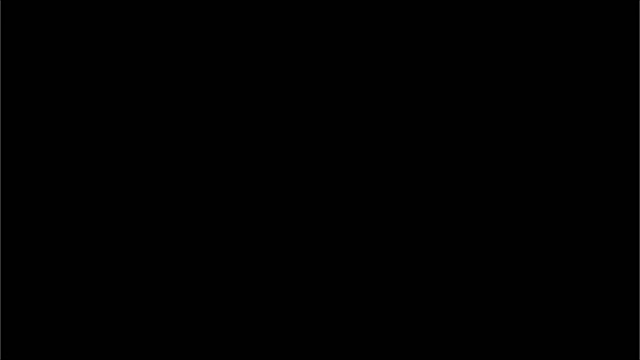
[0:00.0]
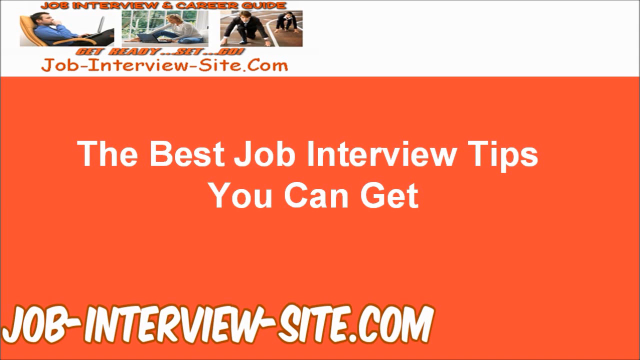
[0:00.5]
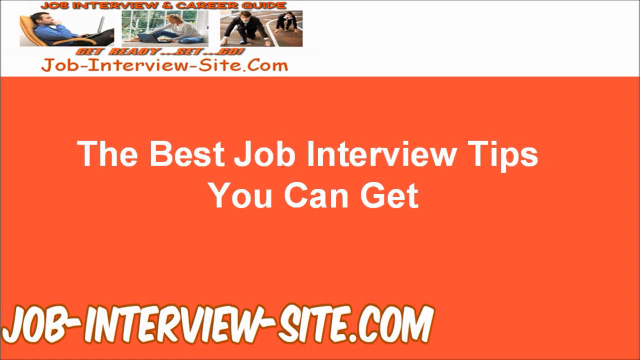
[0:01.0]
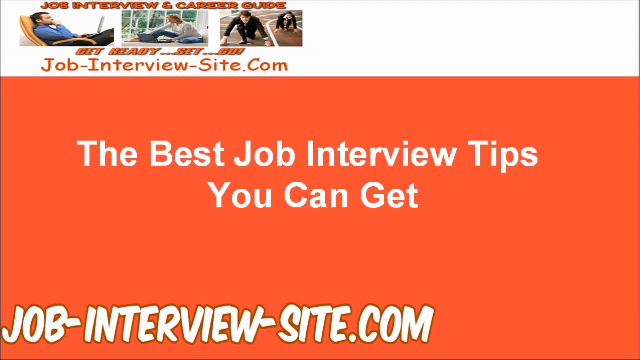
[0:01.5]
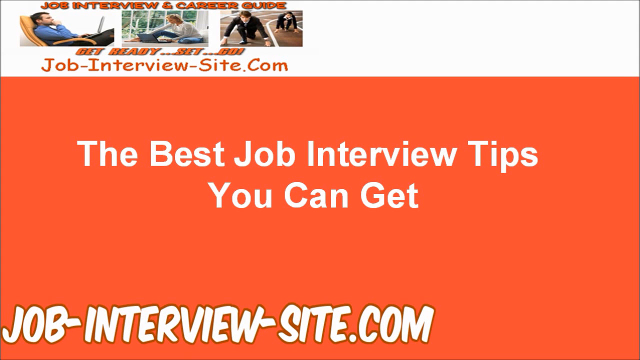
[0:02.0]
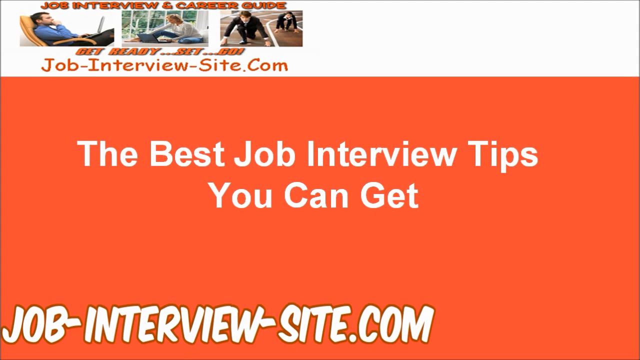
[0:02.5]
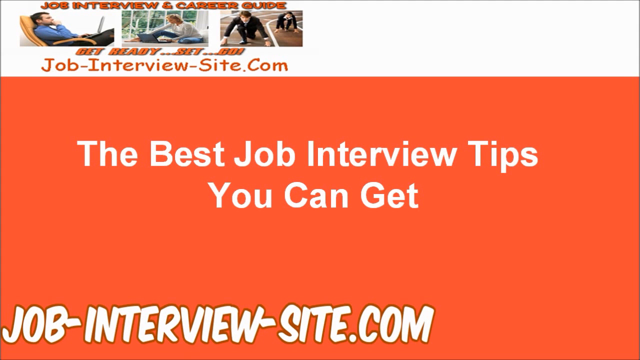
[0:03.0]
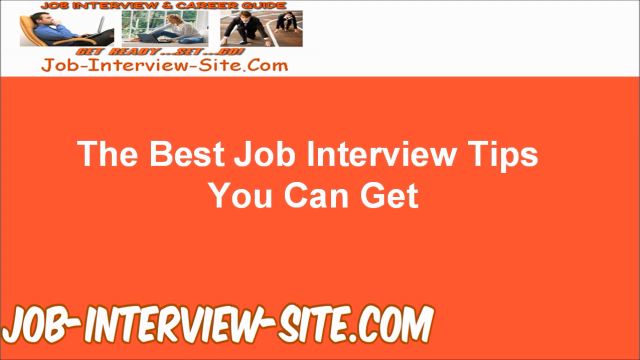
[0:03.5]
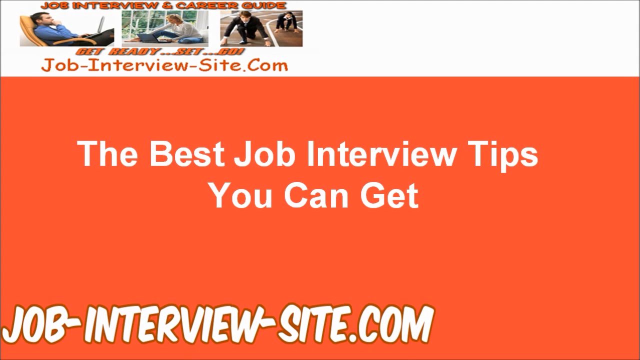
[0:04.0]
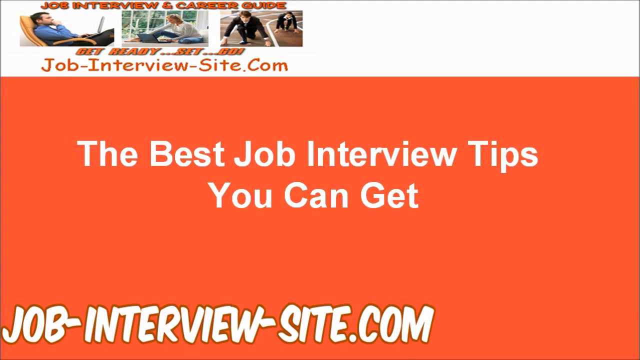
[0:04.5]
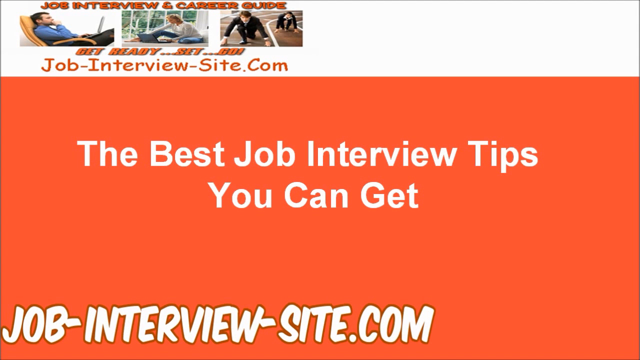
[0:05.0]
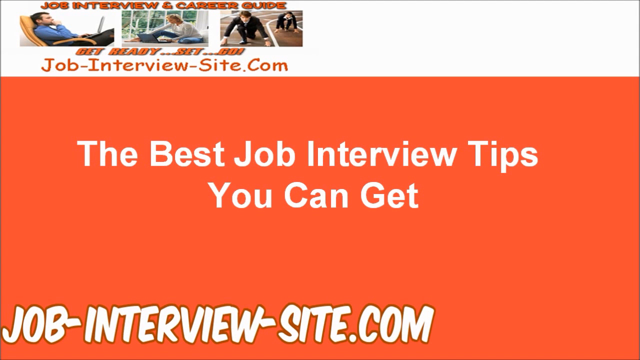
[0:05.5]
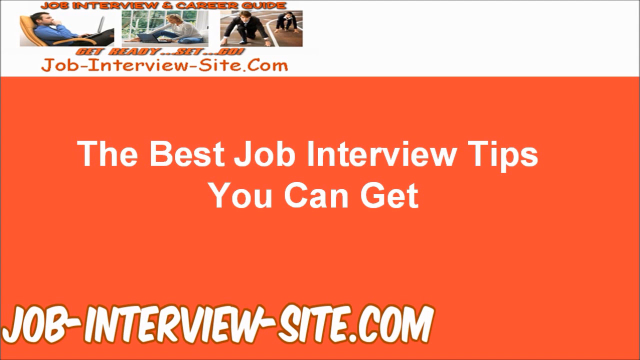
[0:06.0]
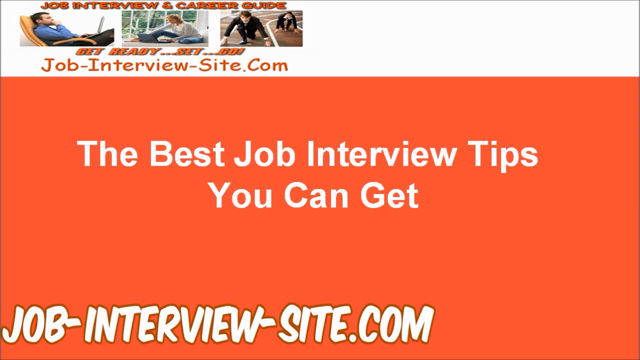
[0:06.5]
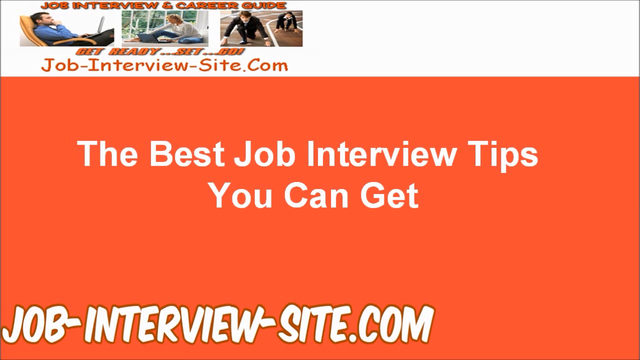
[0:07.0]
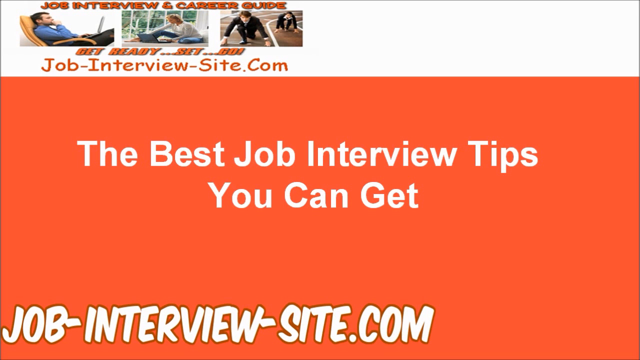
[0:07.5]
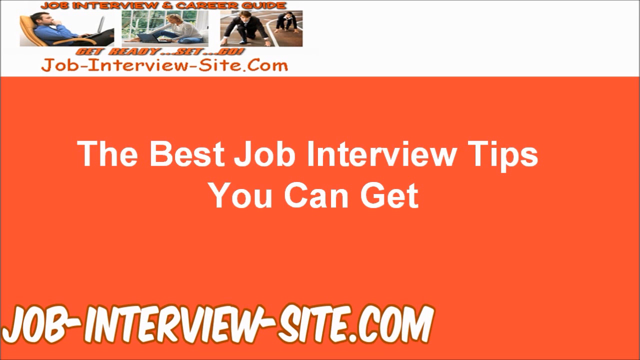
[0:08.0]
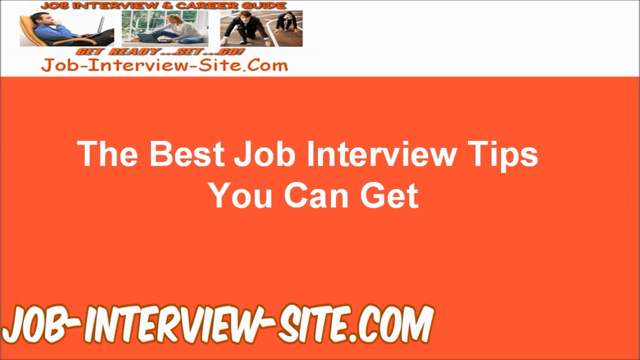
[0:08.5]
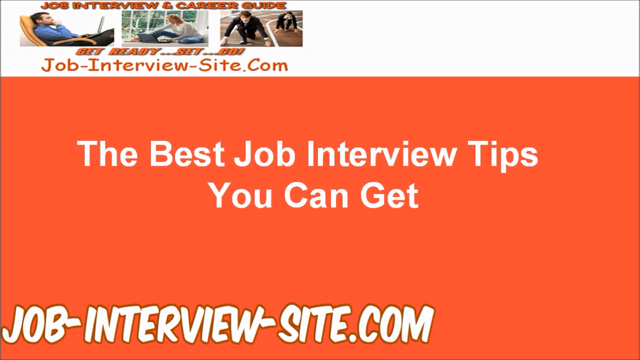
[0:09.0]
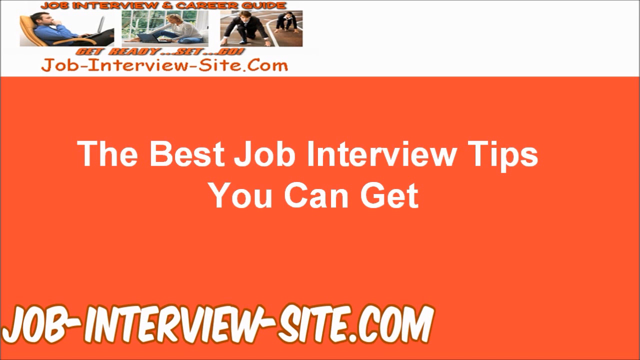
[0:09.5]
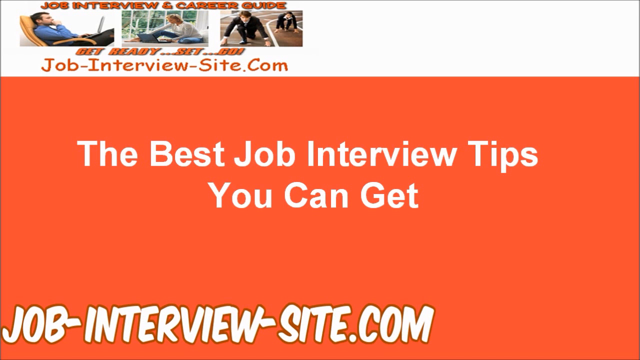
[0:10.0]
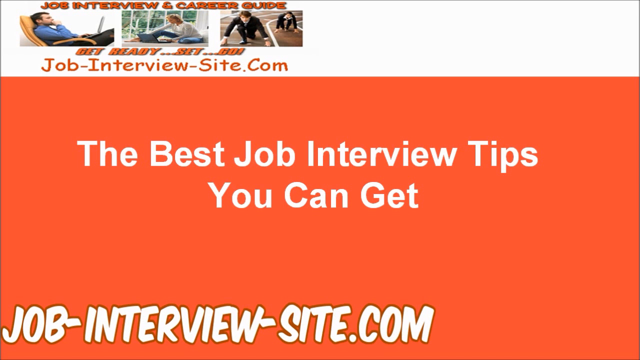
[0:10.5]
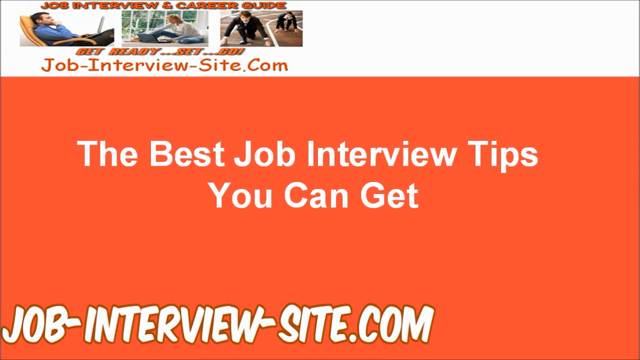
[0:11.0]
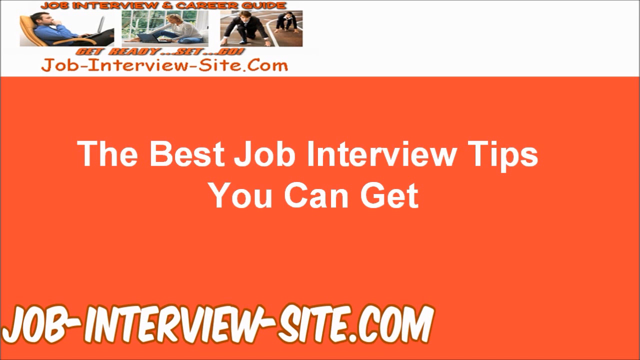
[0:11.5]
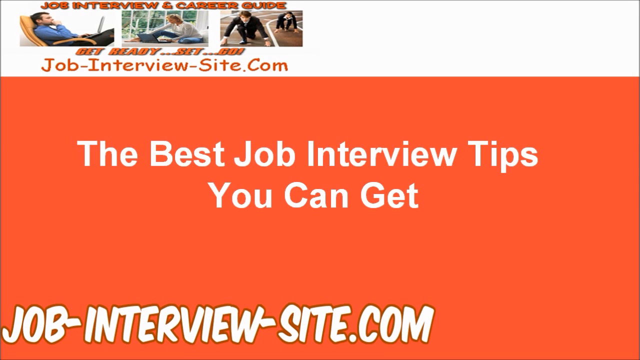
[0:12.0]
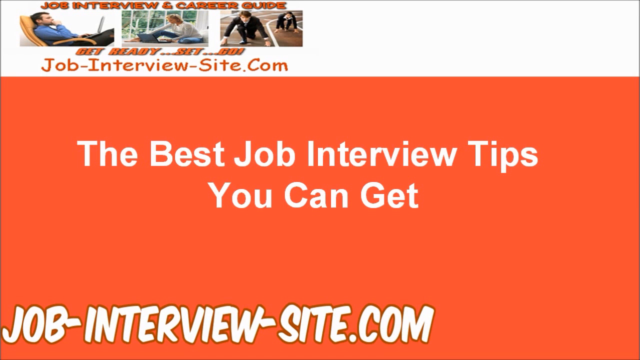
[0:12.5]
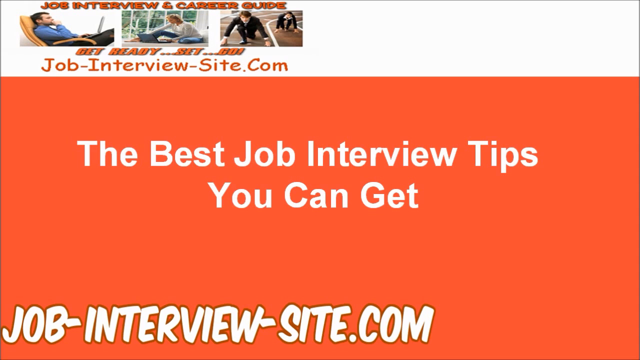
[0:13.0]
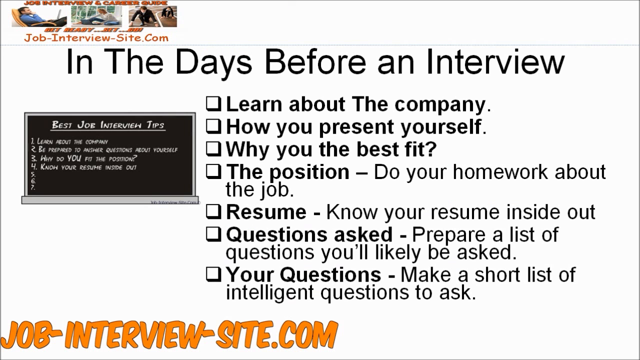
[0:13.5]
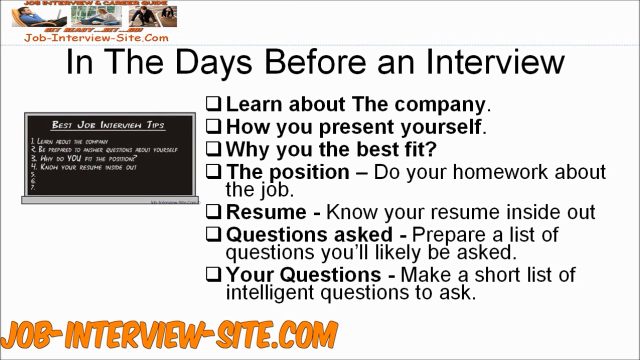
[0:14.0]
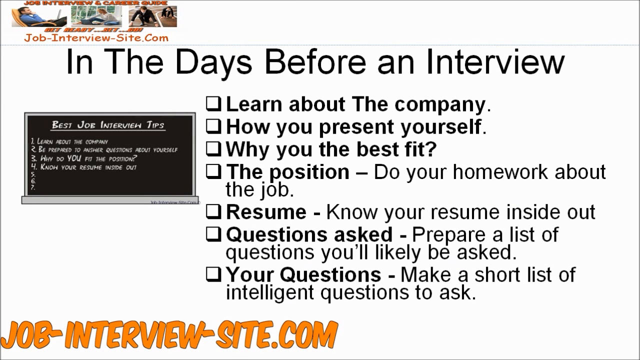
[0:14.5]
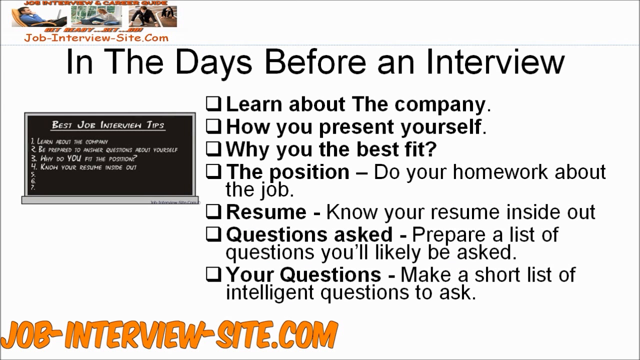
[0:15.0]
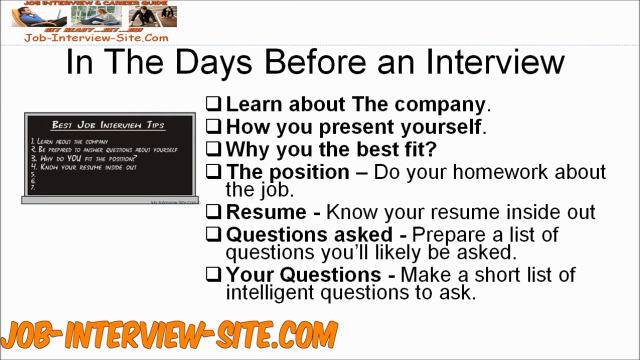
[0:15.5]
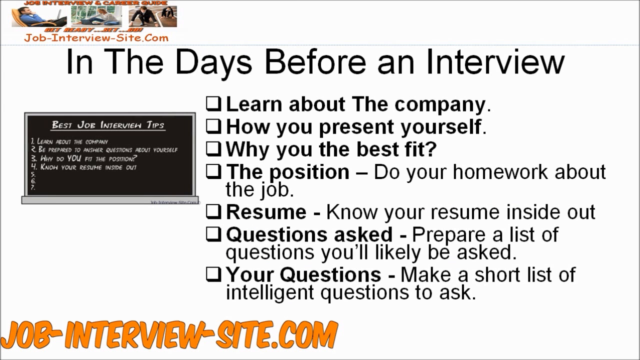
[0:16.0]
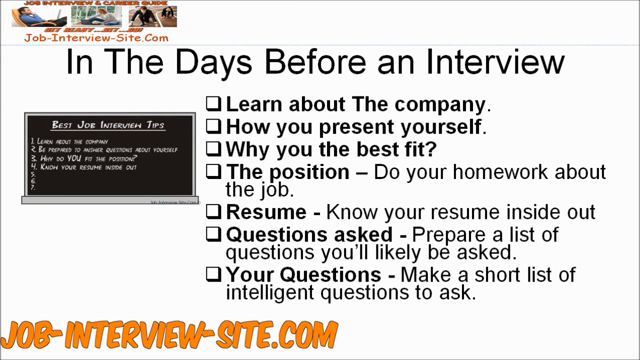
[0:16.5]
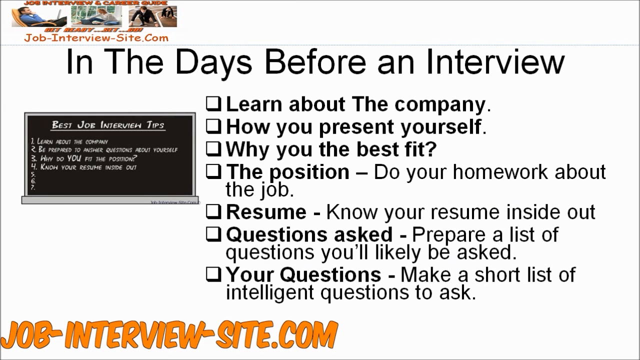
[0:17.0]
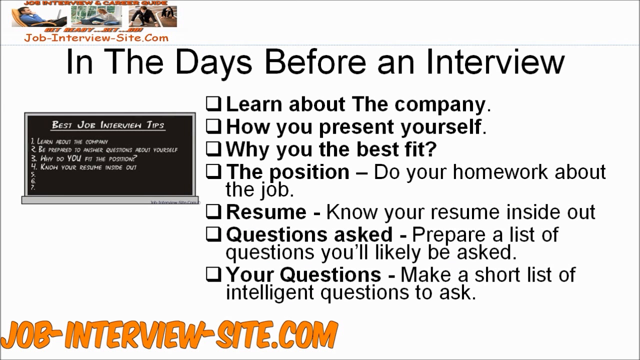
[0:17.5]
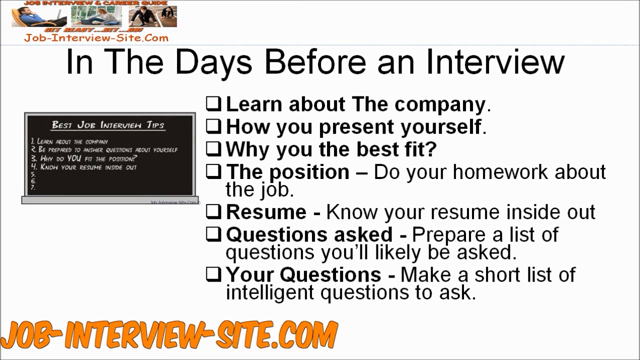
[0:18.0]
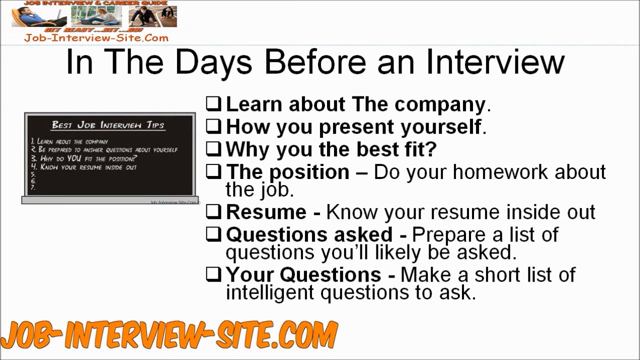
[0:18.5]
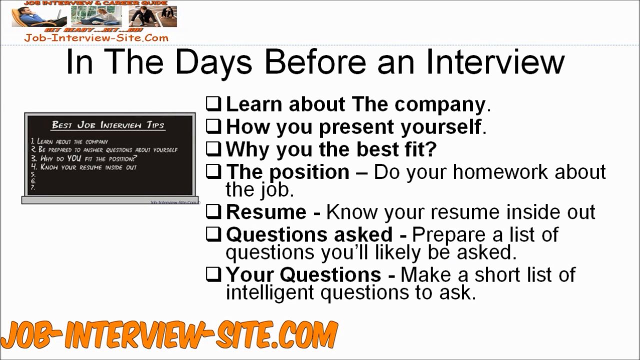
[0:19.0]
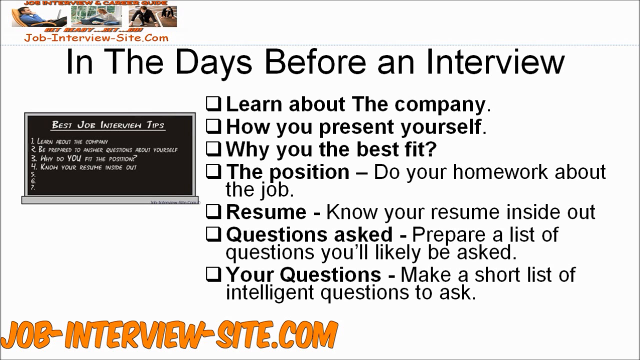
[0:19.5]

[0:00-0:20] The video opens on an orange screen with a small white bar across the top that reads "the best job interview tips you can get." The web address "jobinterviewsite.com" appears at the top of the screen and also at the bottom, and this screen stays up for the first few seconds. At the top left, orange bubble writing reads "job interview and career guide," with three images underneath. In one, a man in a blue shirt and dark trousers is sat in a reclining brown chair. In the middle, a woman appears to be sat on the floor typing on a laptop. On the right, two men, both dressed in black suits, are at the starting blocks on an athletics racing track, about to begin a race. The next page then begins.